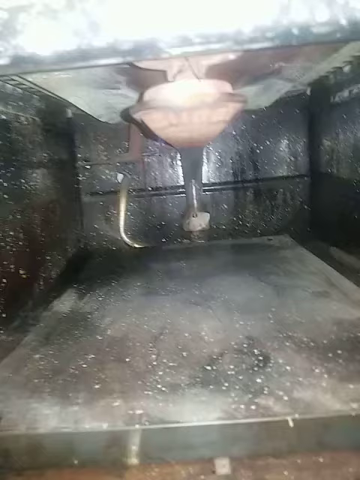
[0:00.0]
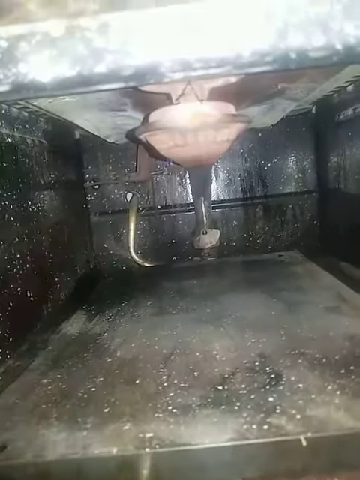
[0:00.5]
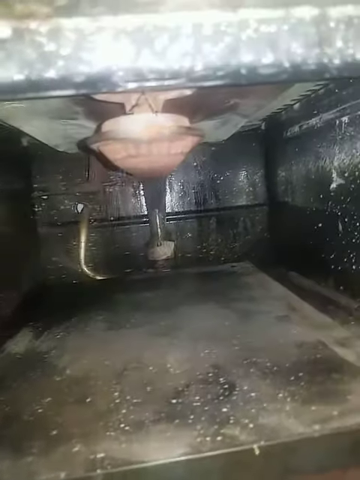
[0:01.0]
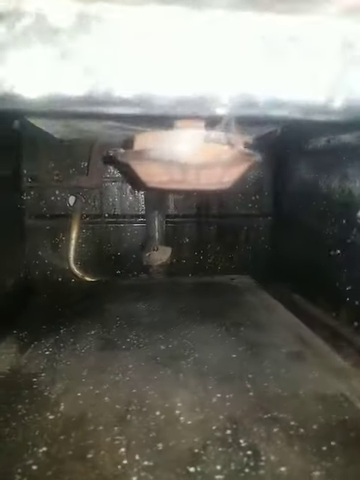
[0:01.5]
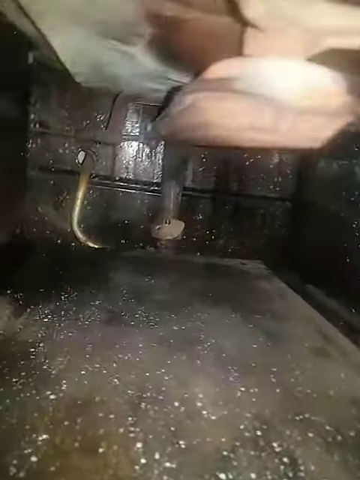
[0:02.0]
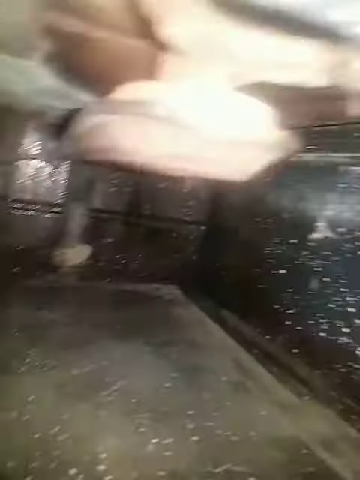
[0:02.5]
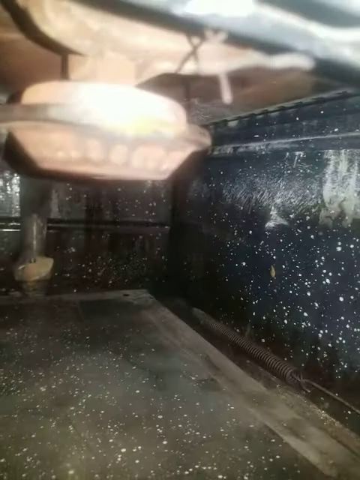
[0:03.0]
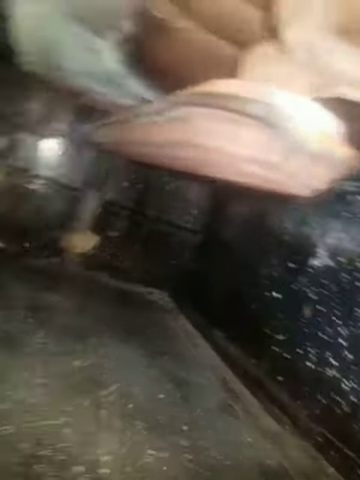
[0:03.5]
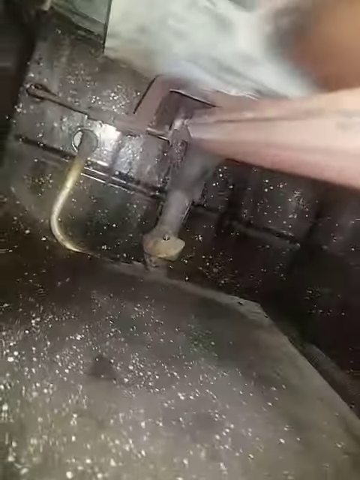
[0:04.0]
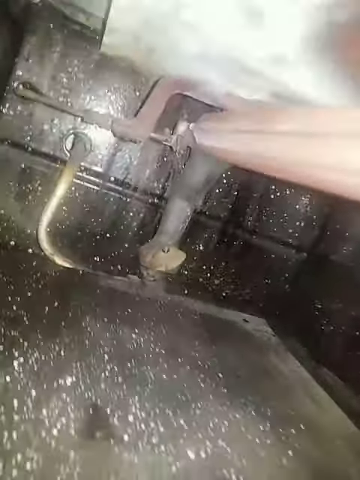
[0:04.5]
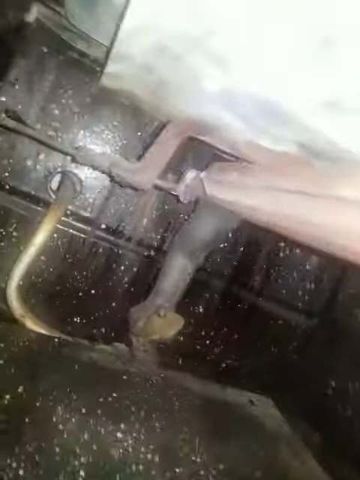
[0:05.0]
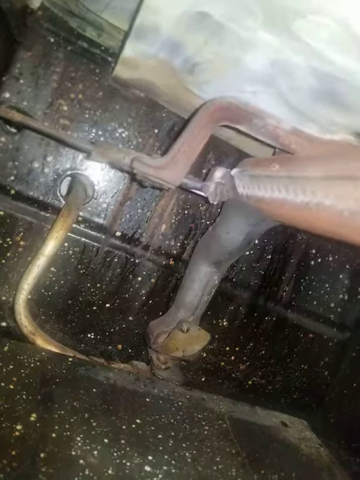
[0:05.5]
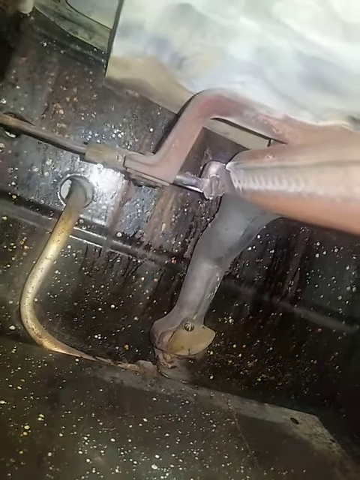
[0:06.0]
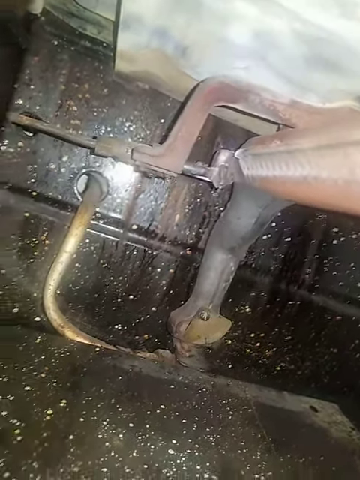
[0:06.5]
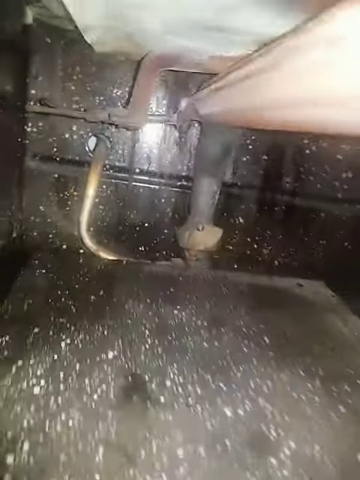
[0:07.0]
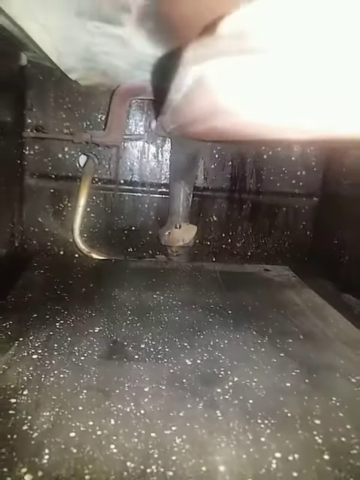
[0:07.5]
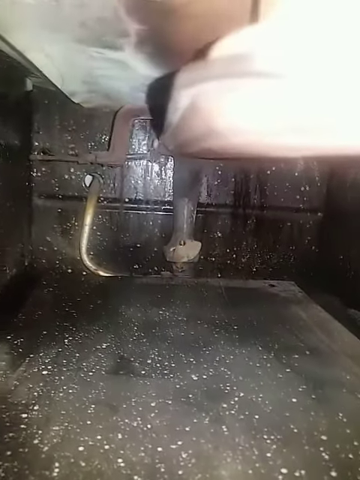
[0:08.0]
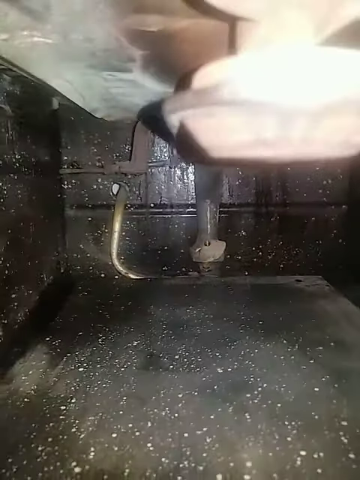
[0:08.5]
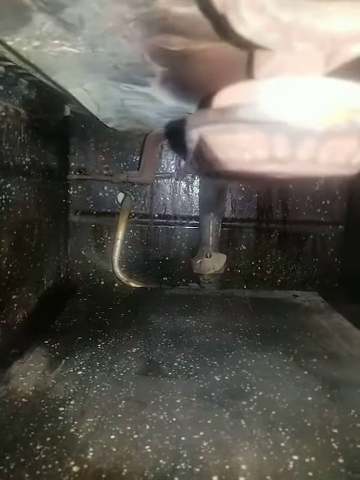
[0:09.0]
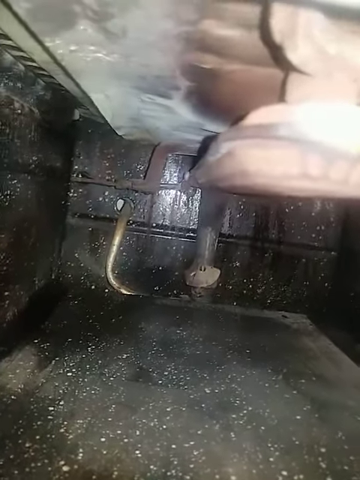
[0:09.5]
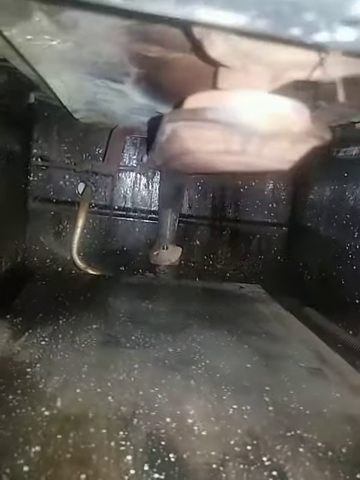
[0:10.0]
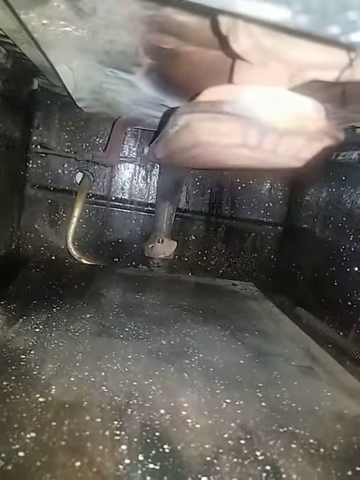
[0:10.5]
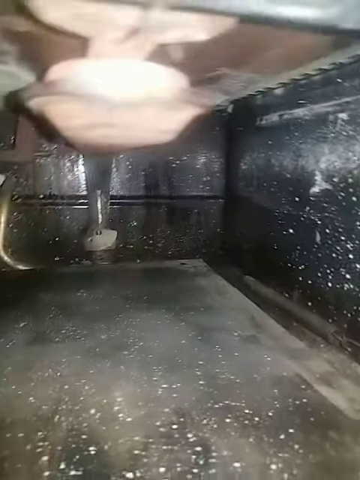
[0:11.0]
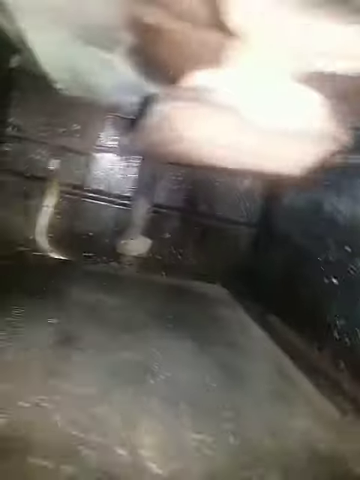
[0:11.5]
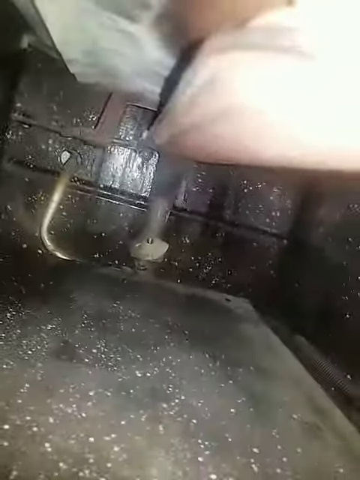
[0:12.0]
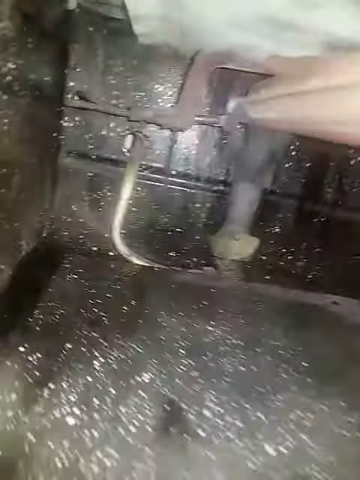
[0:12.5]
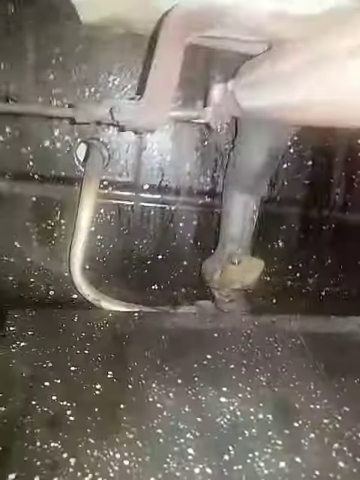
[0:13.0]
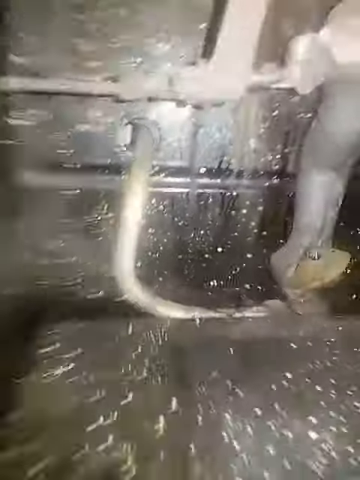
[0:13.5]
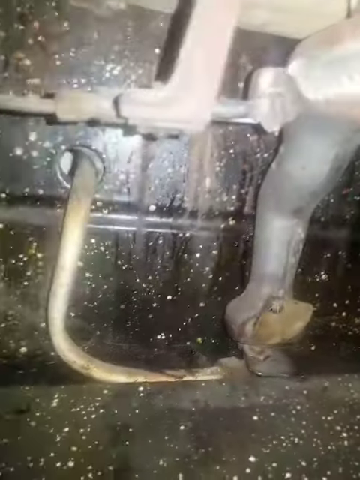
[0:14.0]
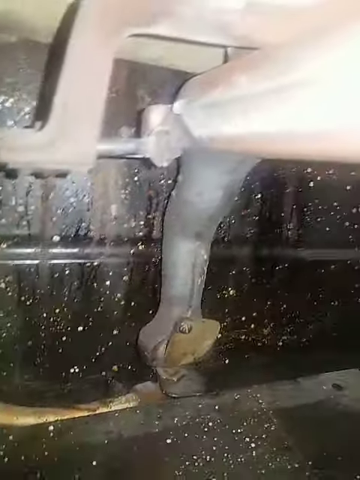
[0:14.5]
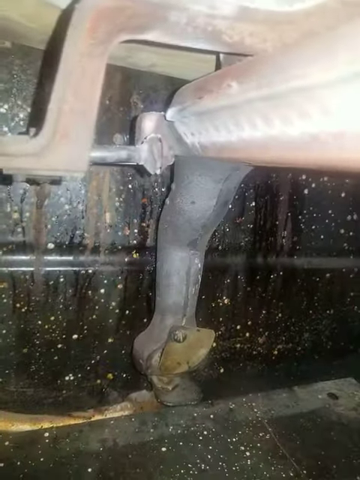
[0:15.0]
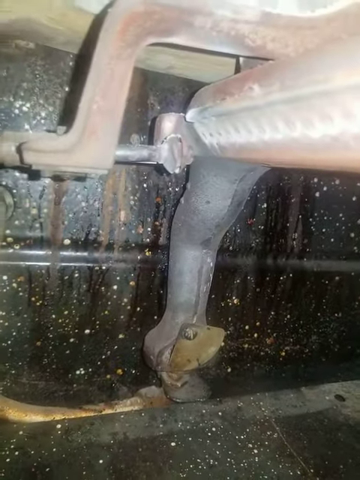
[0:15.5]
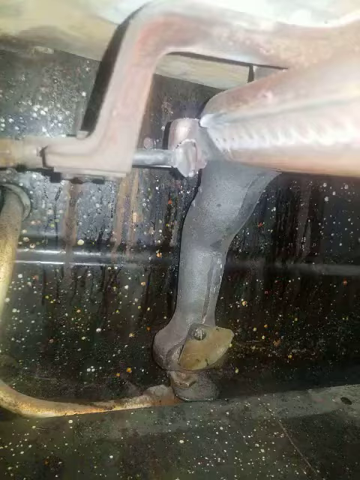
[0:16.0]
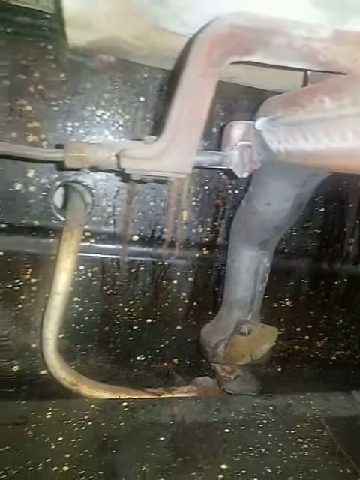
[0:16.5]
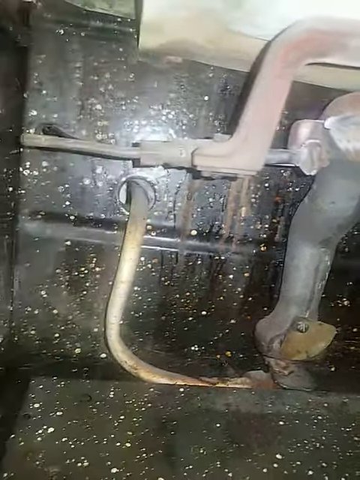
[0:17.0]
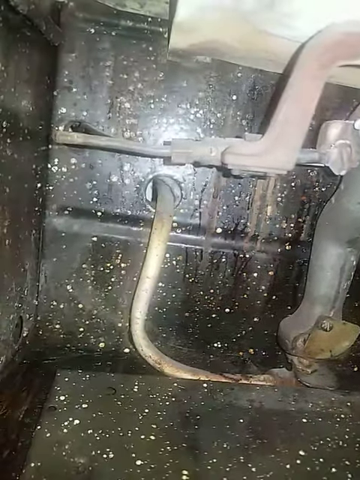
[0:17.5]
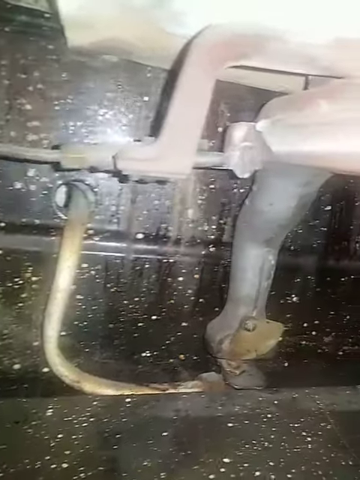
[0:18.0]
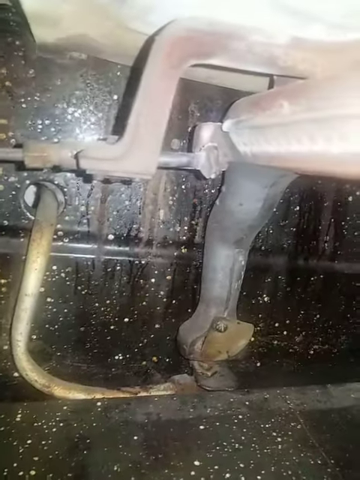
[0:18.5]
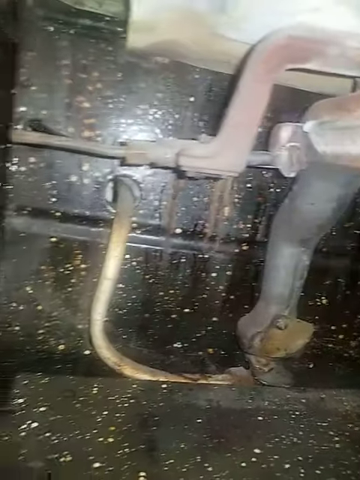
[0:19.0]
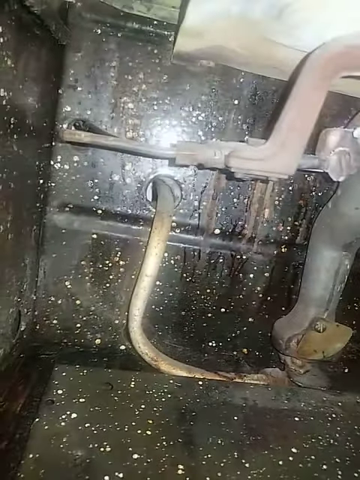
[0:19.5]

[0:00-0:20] The video opens inside a machine with black walls covered in white spots. The parts are rusty, with an orange look, and seem quite dirty. Along the black walls there are what seem to be pipes, possibly for gas, rather than cables. The camera movement seems shaky, almost as if a phone were being moved around inside by hand. It looks like the inside of an oven or stove, which is not in great condition, and there are quite a few parts in it.